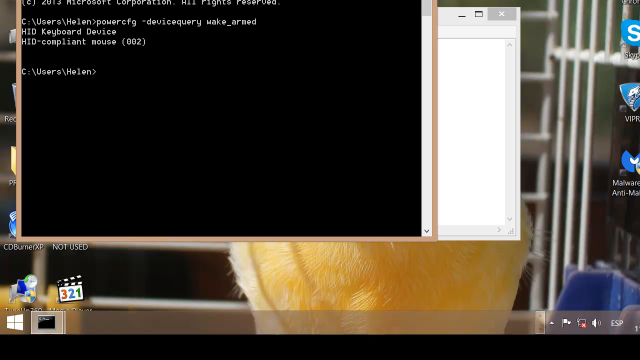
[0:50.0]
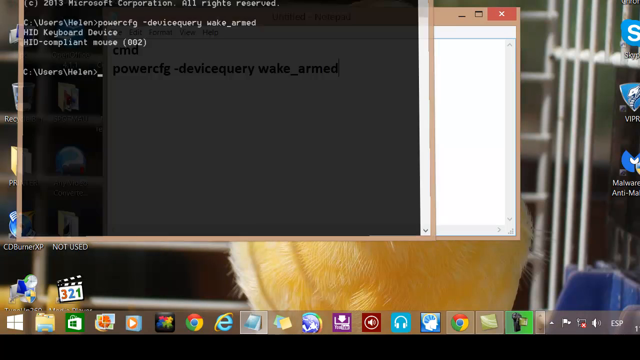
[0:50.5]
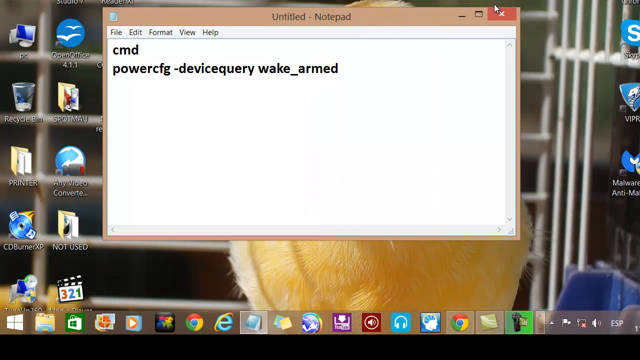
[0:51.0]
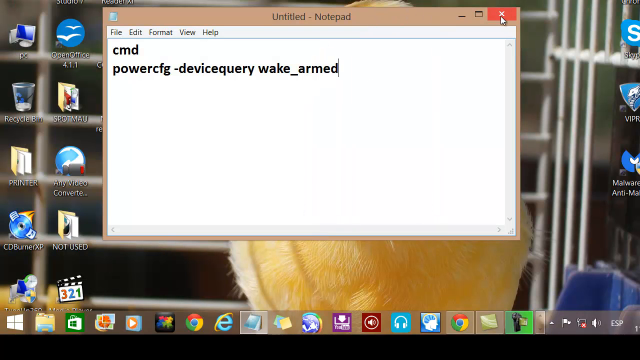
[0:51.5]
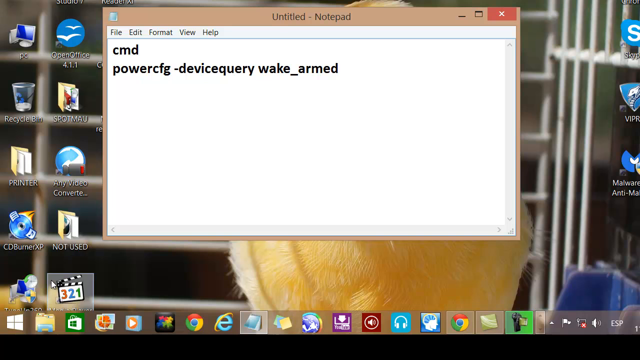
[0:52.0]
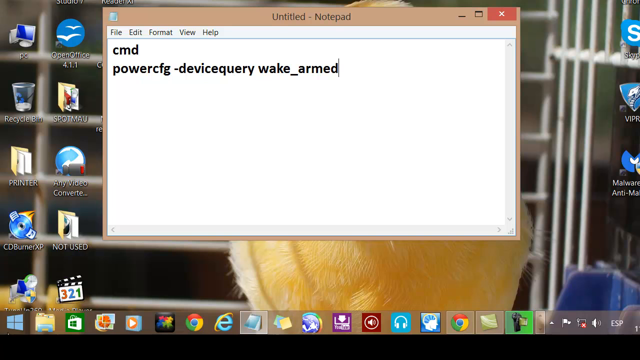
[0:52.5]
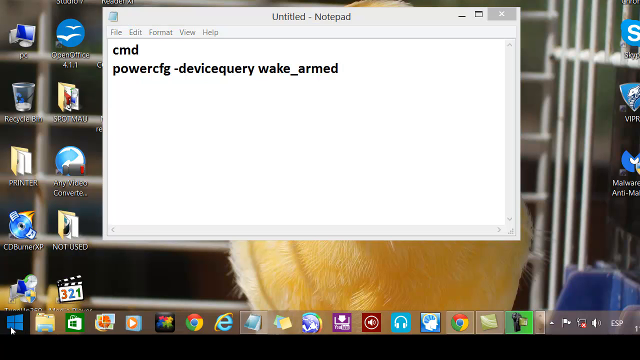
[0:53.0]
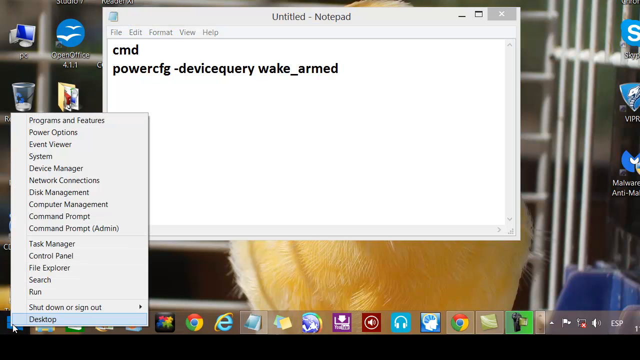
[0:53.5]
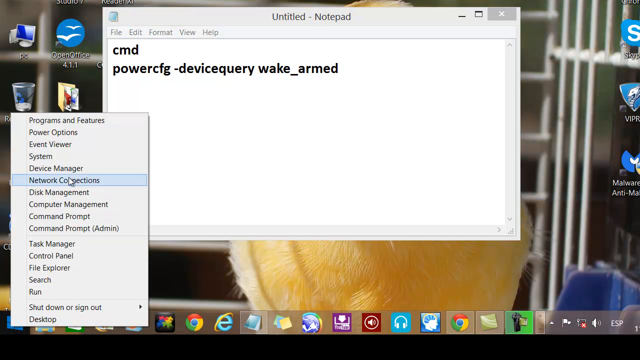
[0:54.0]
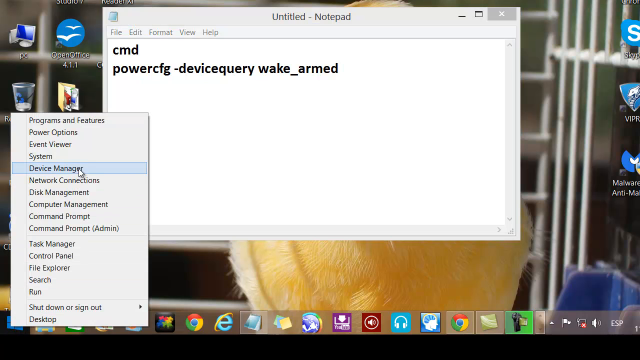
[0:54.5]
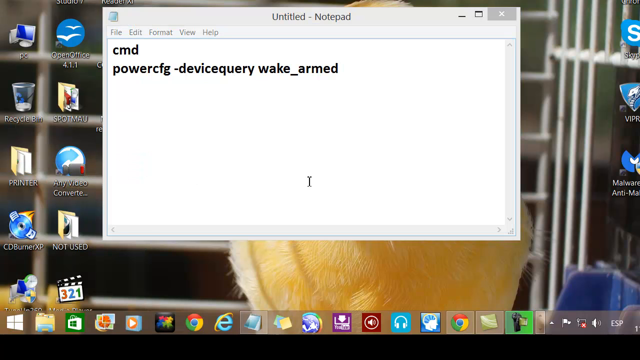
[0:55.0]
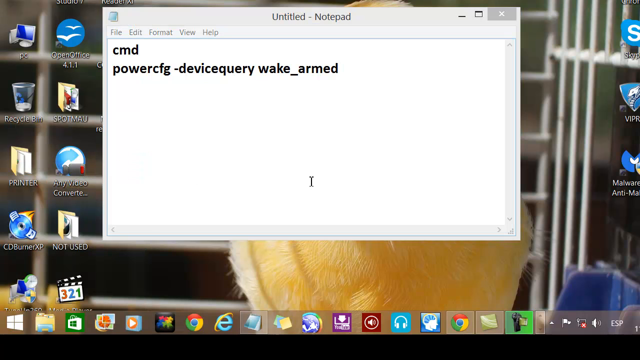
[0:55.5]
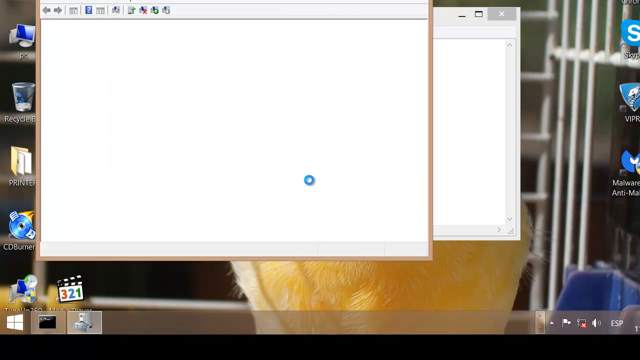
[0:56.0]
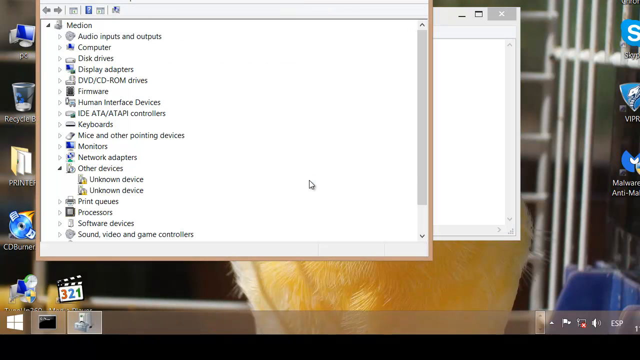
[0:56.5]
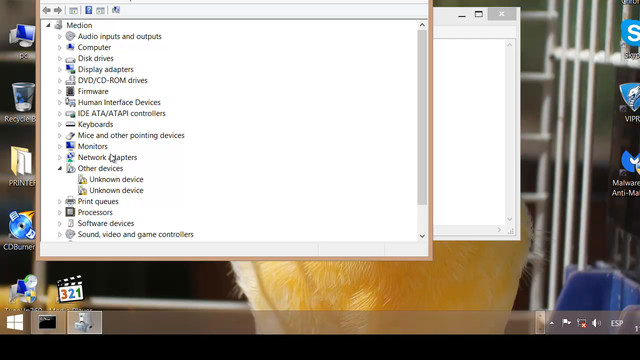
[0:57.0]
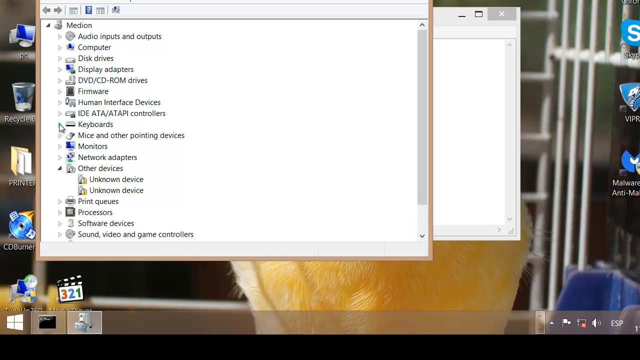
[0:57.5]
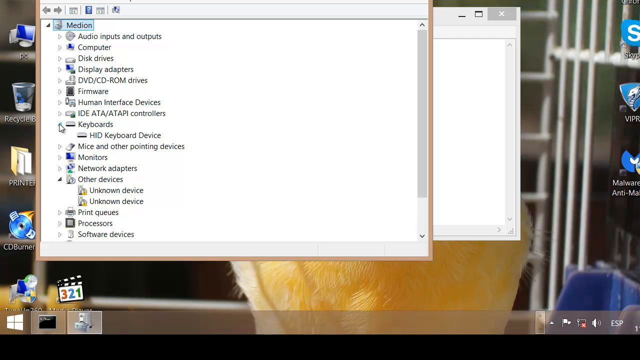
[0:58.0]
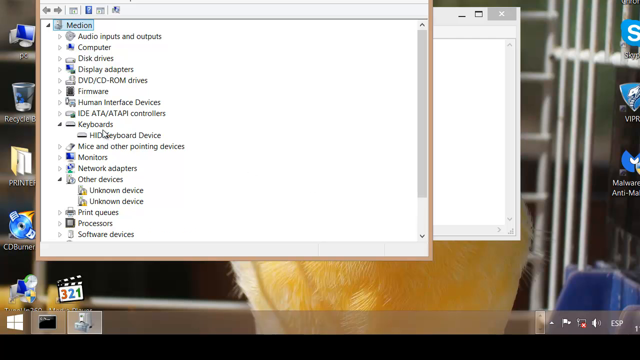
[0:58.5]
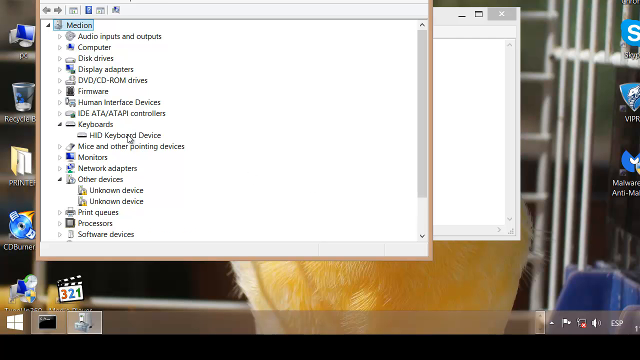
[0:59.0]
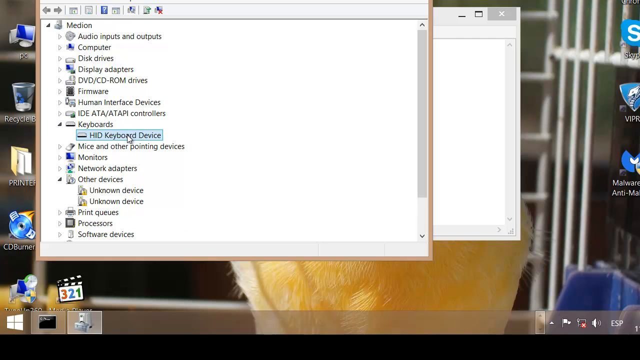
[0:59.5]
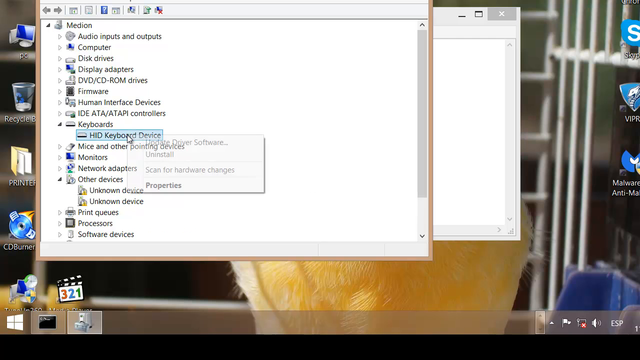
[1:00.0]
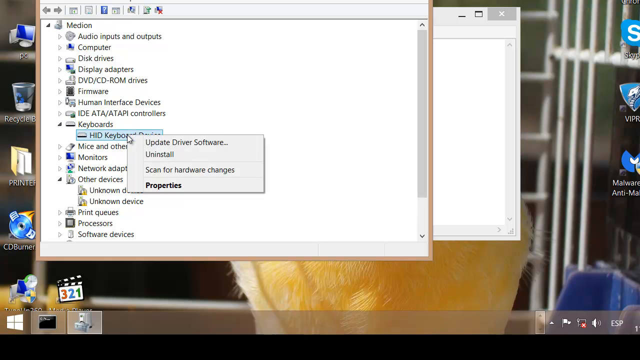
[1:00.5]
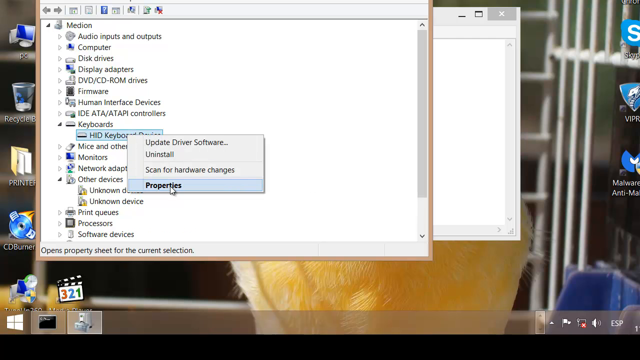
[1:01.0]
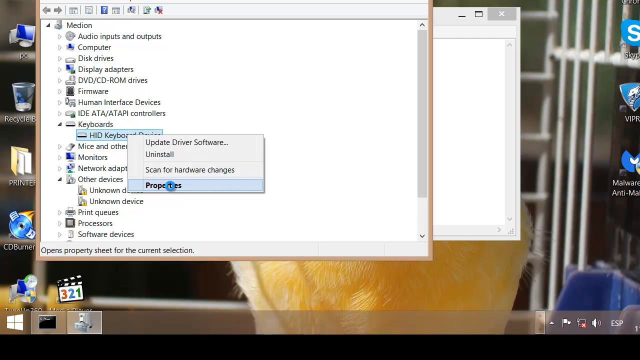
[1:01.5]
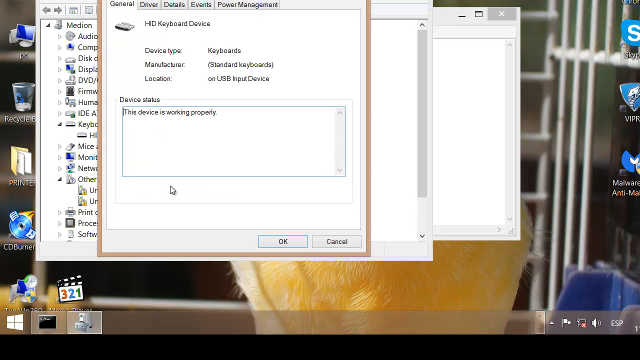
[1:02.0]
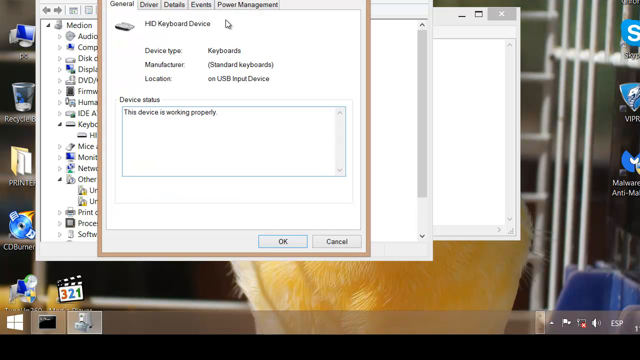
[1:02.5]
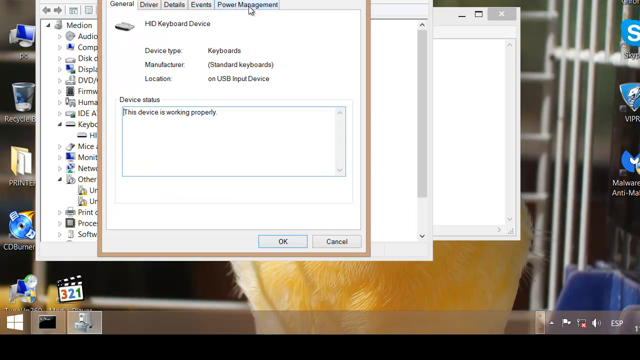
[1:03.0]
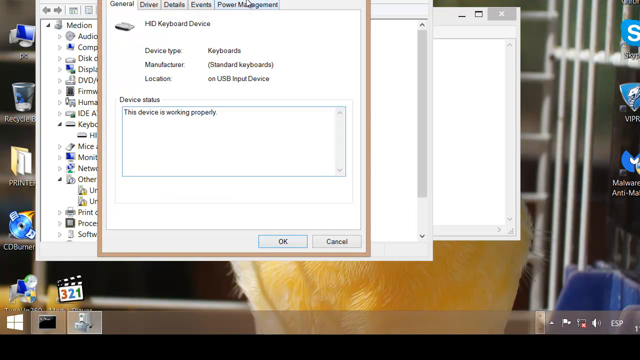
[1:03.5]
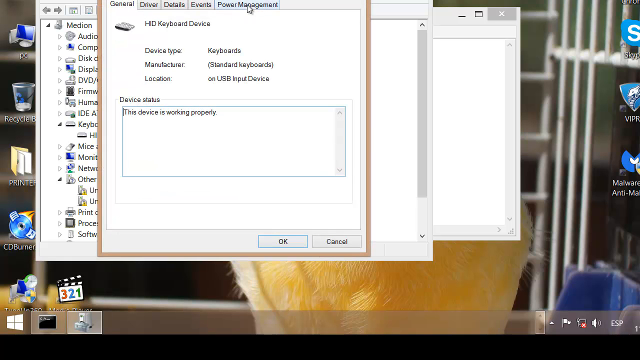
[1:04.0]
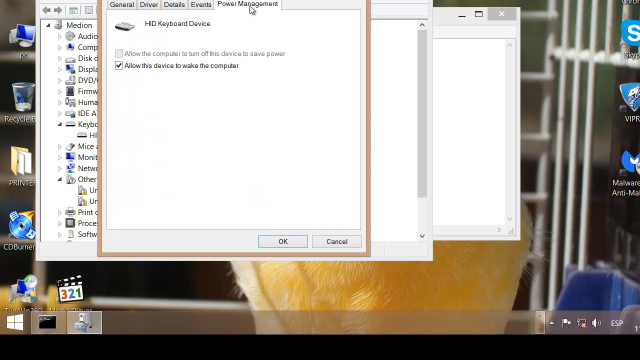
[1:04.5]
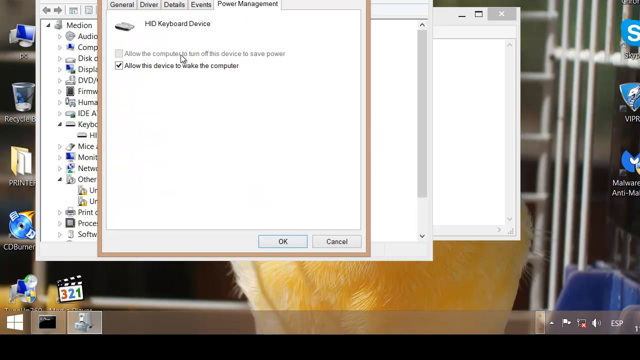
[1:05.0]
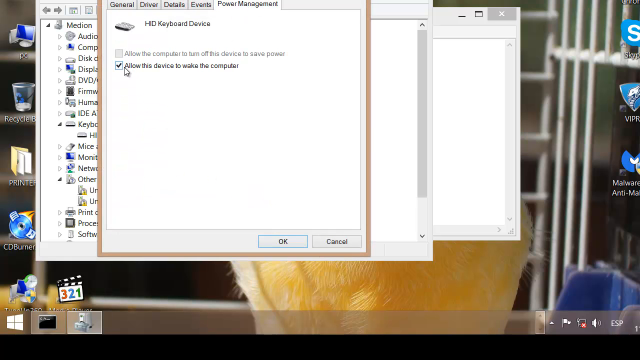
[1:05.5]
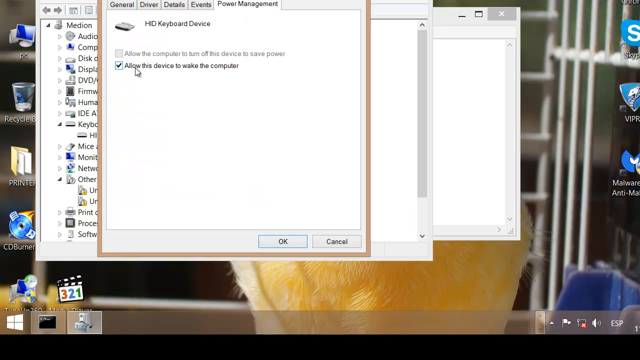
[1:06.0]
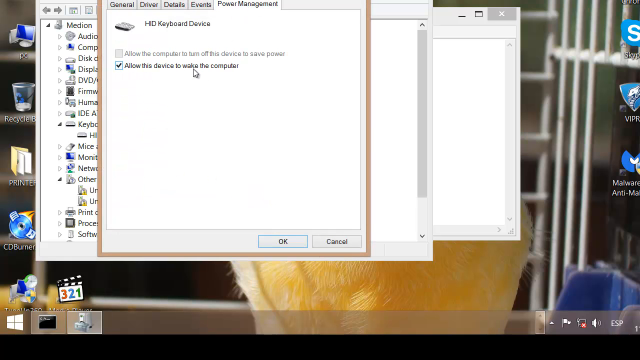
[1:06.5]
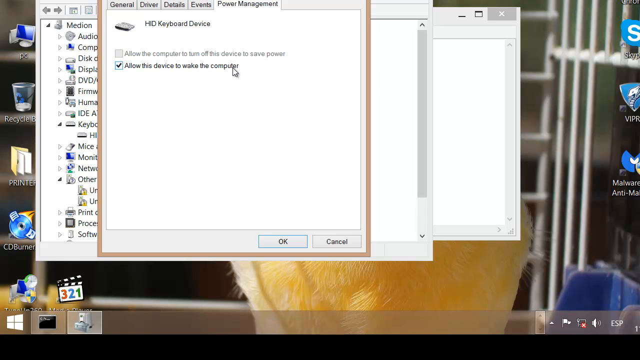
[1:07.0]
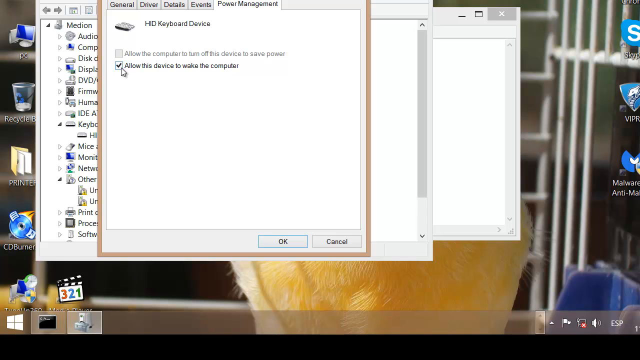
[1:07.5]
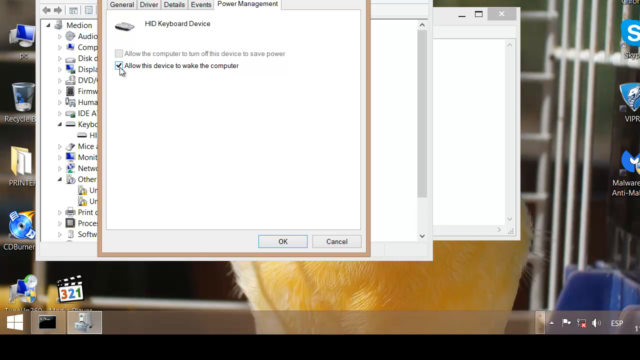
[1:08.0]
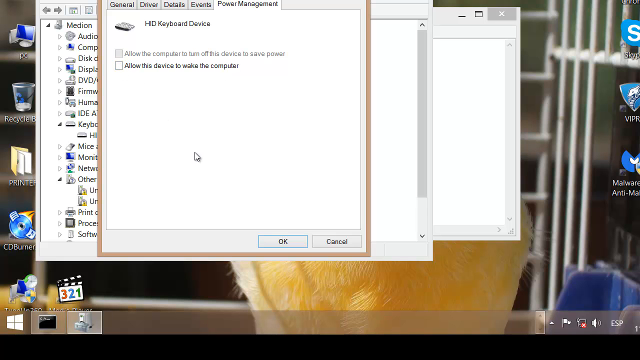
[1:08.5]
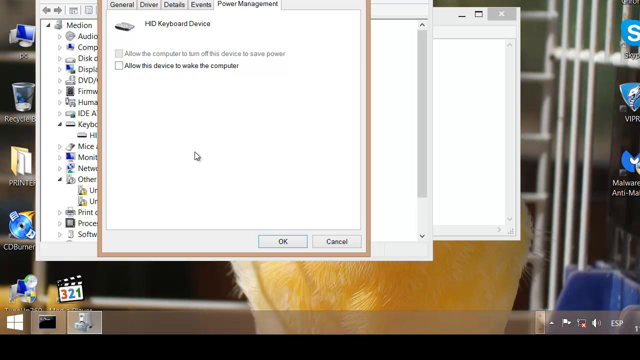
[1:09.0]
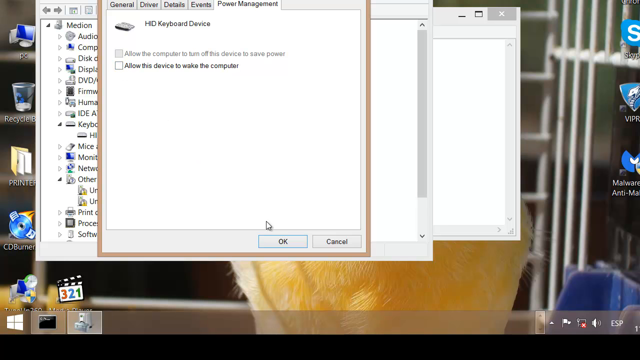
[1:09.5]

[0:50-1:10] With the command prompt entered, the person opens a device manager registry window and deliberately moves down to the keyboard and then to the power management tab in that window. Many windows open up. Each action is done slowly, and the cursor moves slowly, highlighting or moving along with each word on the screen. A checkbox is unchecked and confirmed with an OK click. The desktop background with a yellow duck or bird is still visible, along with all the icons on the desktop and many icons on the taskbar at the bottom of the screen.